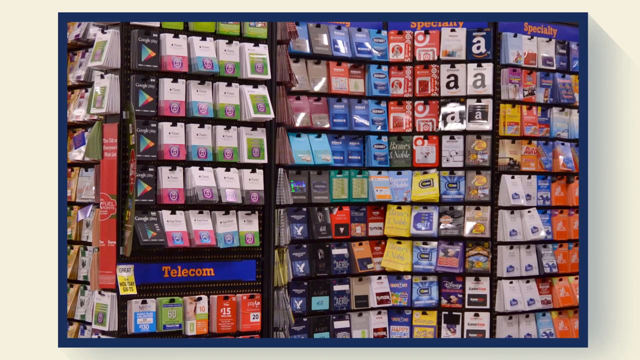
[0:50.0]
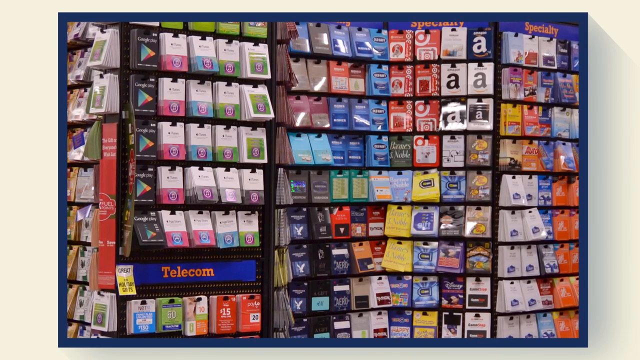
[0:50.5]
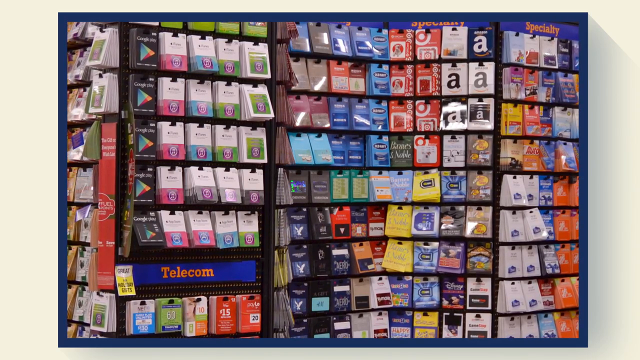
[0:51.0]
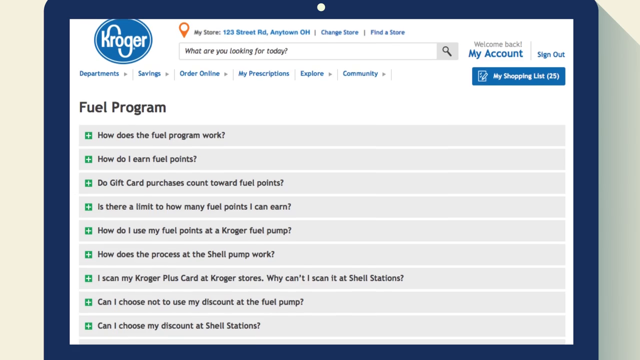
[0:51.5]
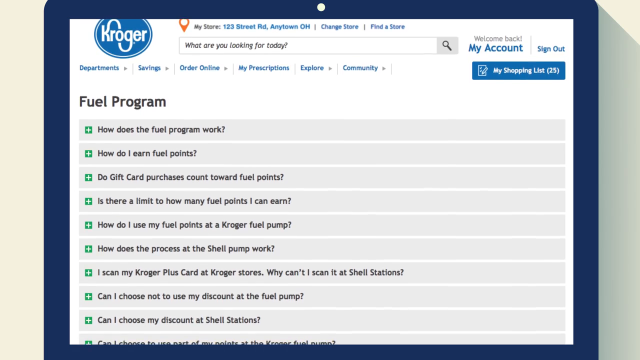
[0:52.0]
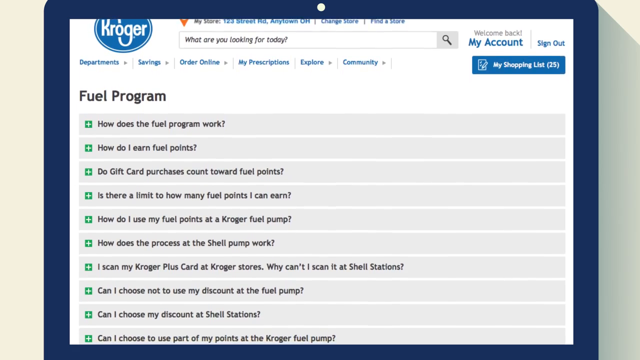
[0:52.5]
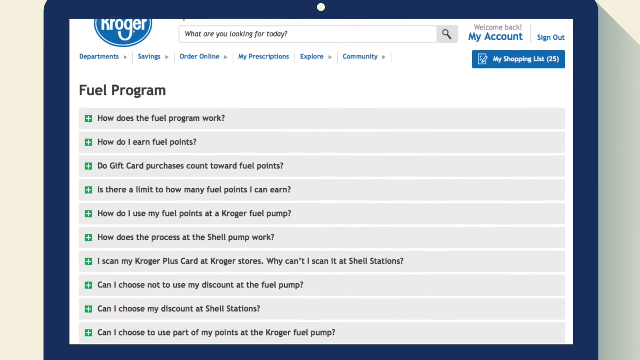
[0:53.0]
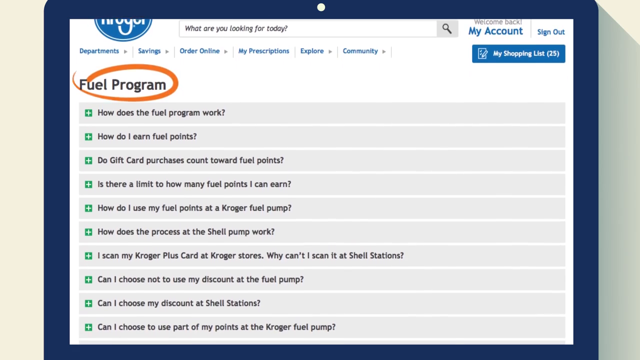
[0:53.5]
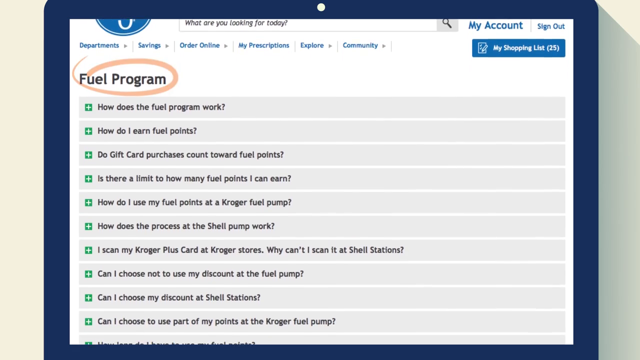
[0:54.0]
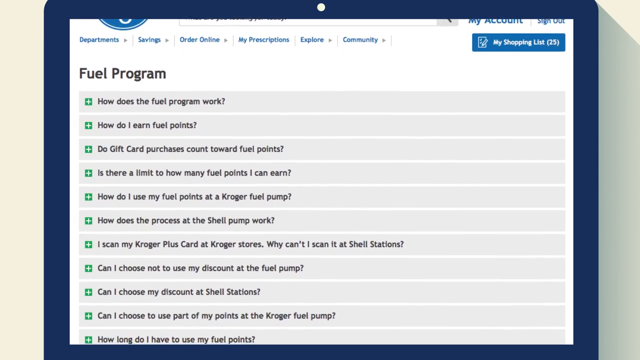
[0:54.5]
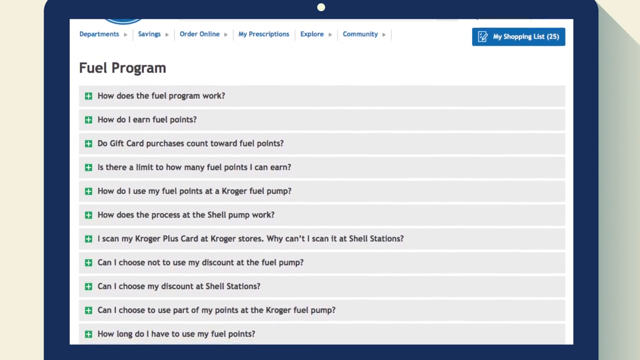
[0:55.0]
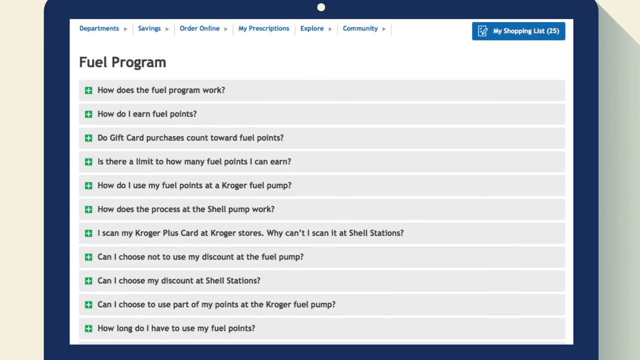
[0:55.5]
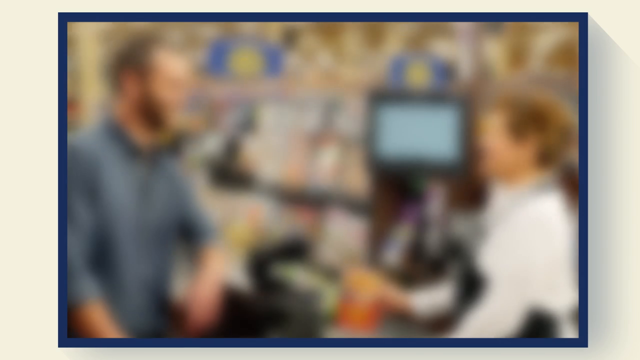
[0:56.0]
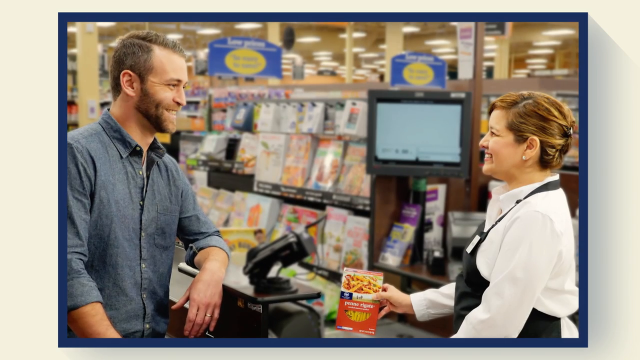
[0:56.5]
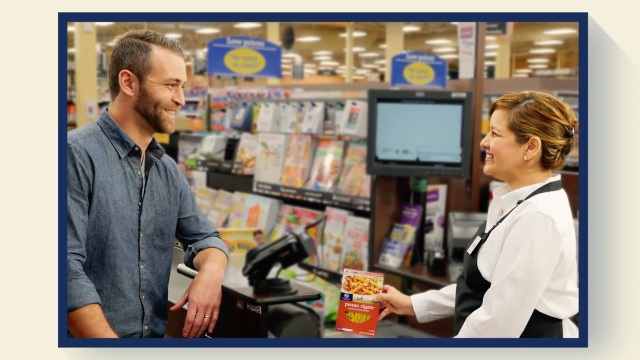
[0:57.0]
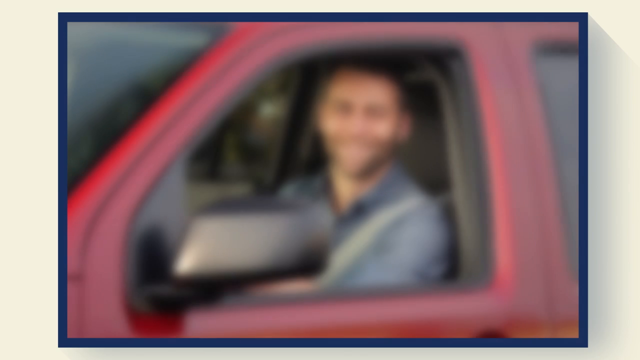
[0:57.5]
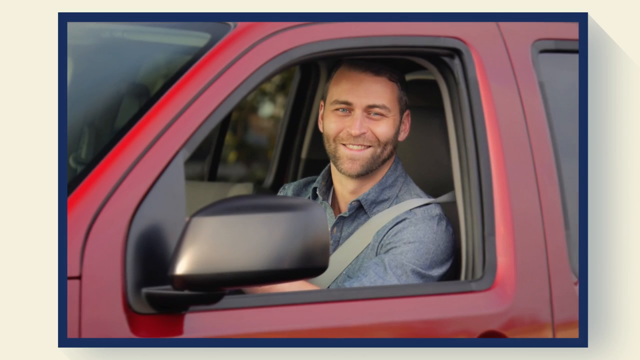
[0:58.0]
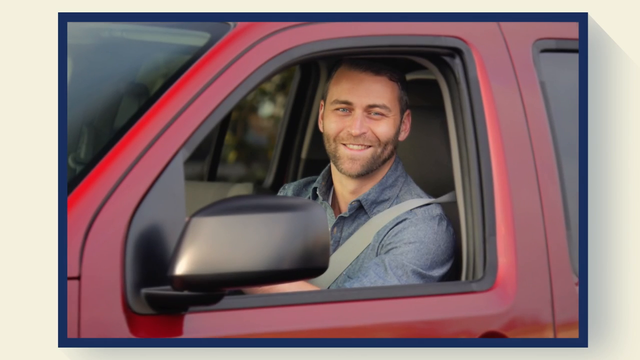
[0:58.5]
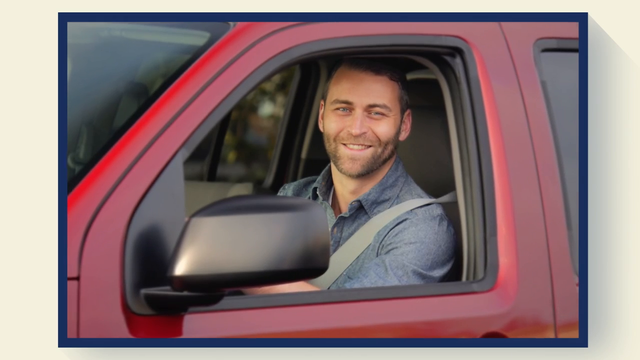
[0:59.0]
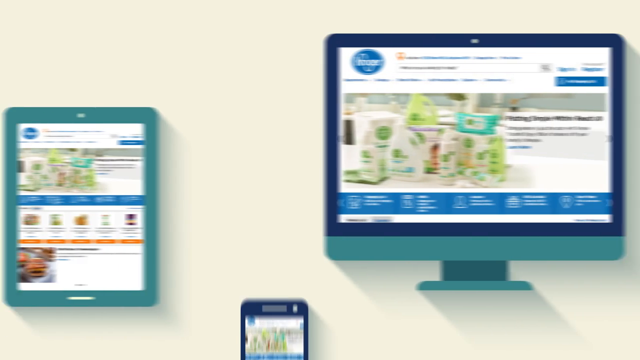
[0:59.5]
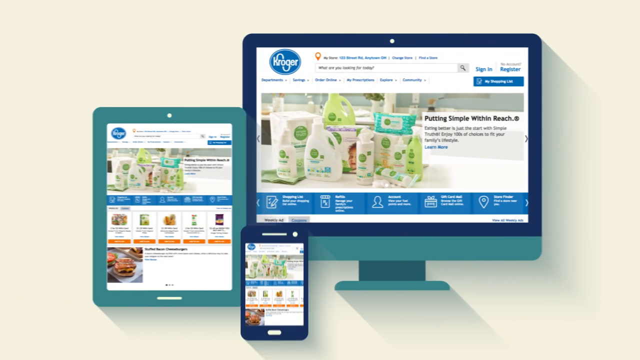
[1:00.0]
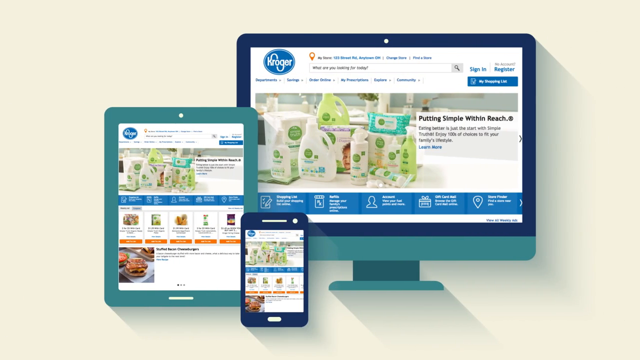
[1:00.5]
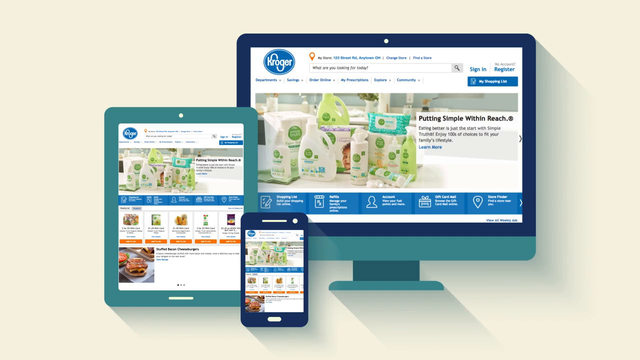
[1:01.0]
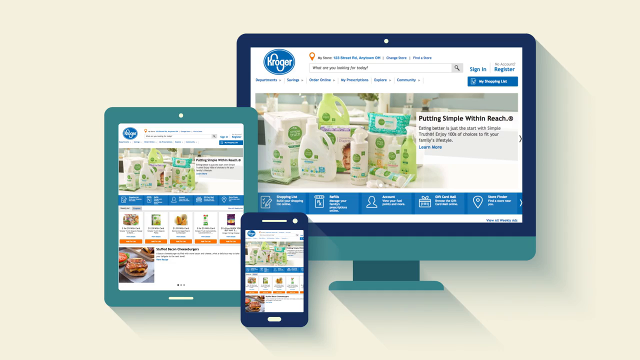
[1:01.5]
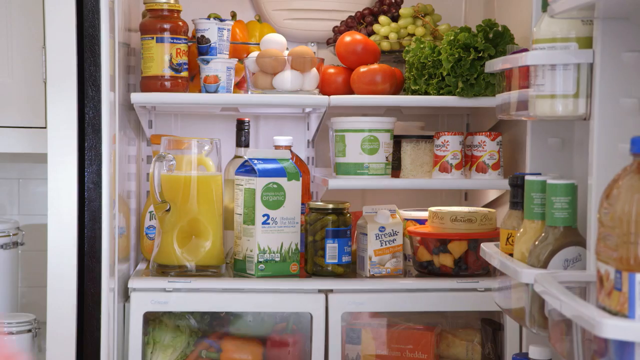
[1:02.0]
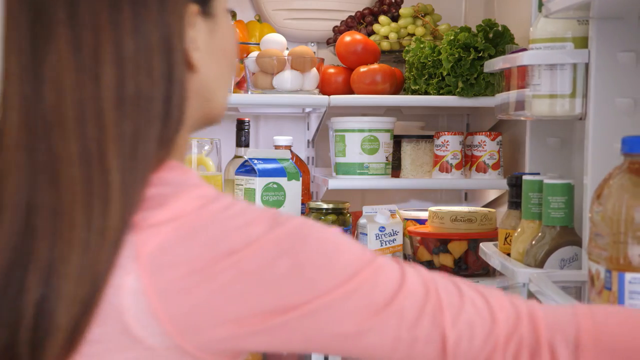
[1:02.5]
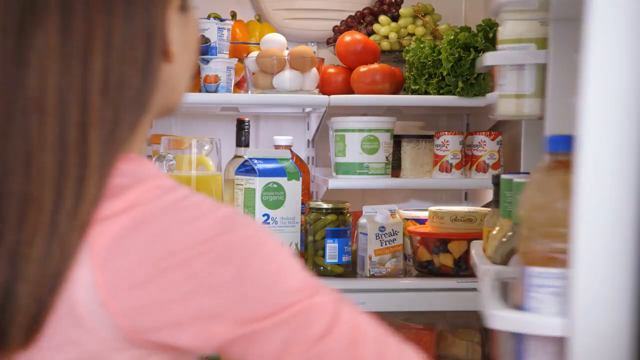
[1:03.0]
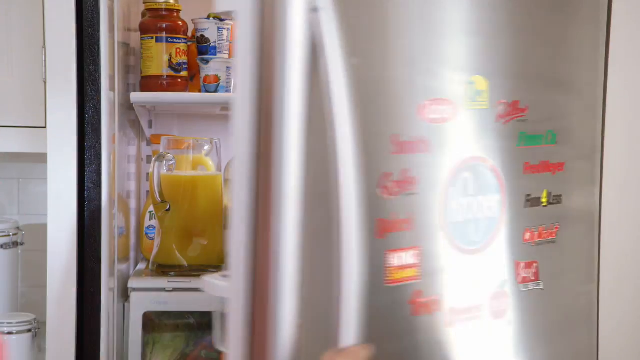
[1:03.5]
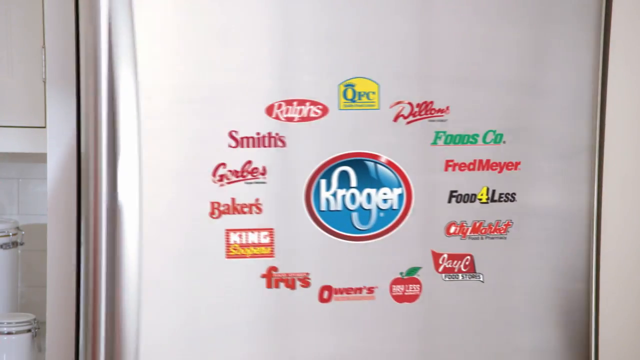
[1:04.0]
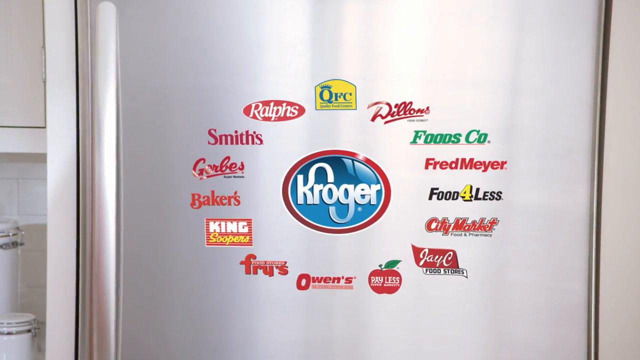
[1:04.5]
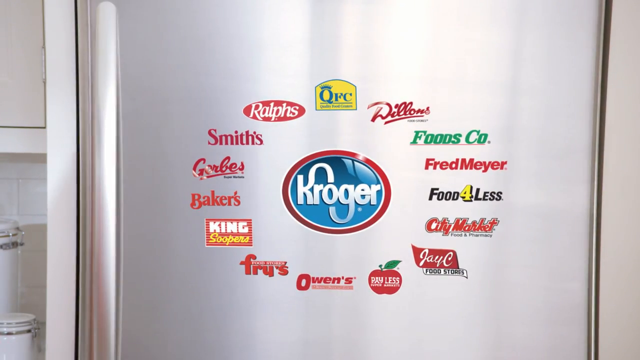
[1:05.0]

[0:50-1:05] The rewards program for the grocery store Kroger is shown, with points exchanged for fuel as well as other rewards, possibly gift cards from major companies such as Amazon and Apple. Still photographs show a man shopping and showing his club card at checkout, fueling his red utility van at the pump, and smiling inside his car. Toward the end, the same fridge door appears, and a woman shuts the door on the groceries to reveal the brands available at the Kroger supermarket, arranged around the central logo. At the 12 o'clock position is the yellow QFC logo, at one o'clock the brand Willows in cursive text, at two o'clock the green Foods Co logo, and above and below the three o'clock position the logos of Fred Mayer and food for less.